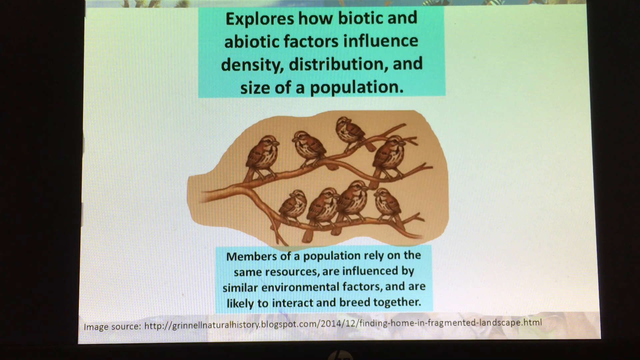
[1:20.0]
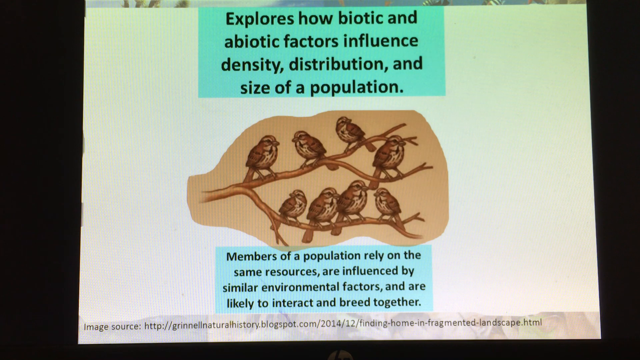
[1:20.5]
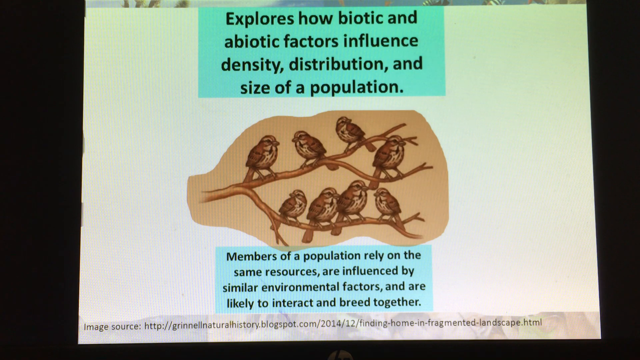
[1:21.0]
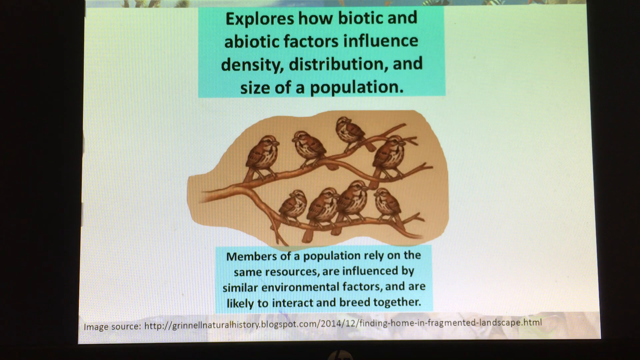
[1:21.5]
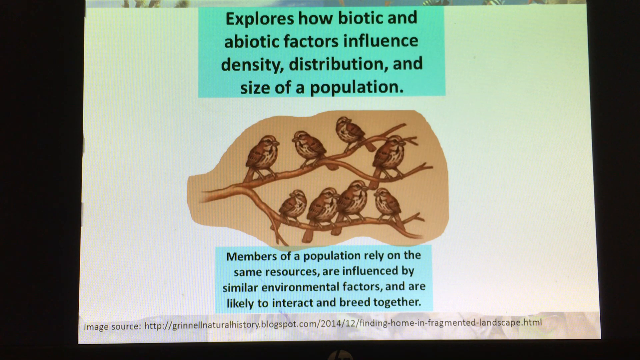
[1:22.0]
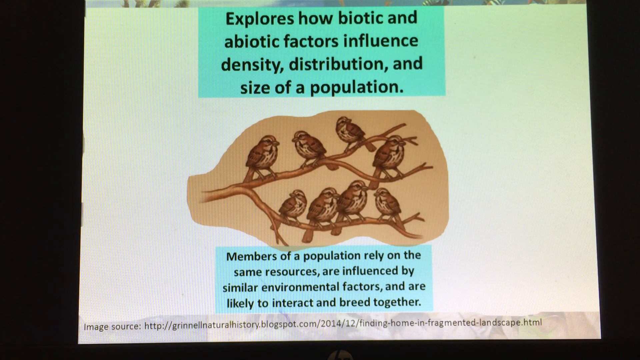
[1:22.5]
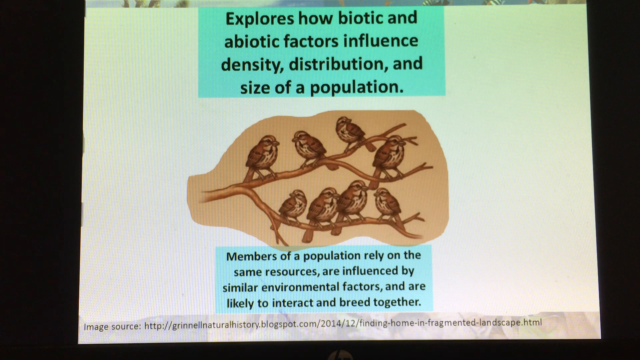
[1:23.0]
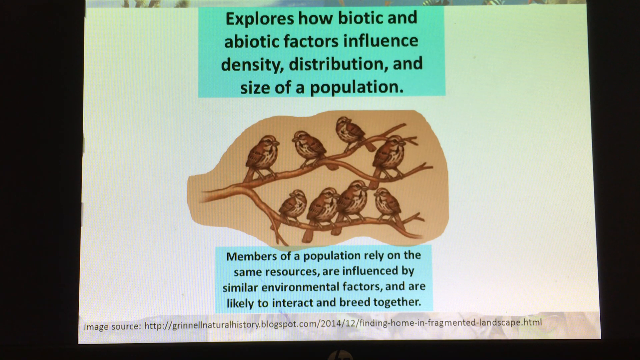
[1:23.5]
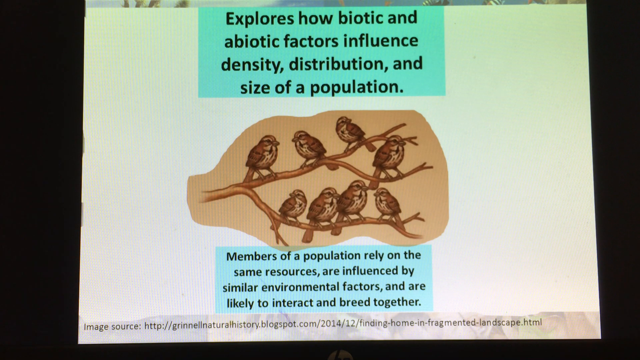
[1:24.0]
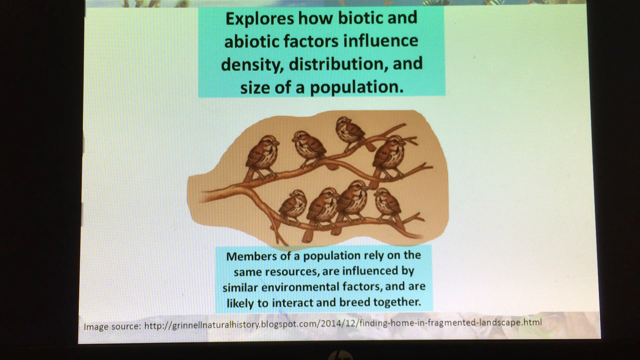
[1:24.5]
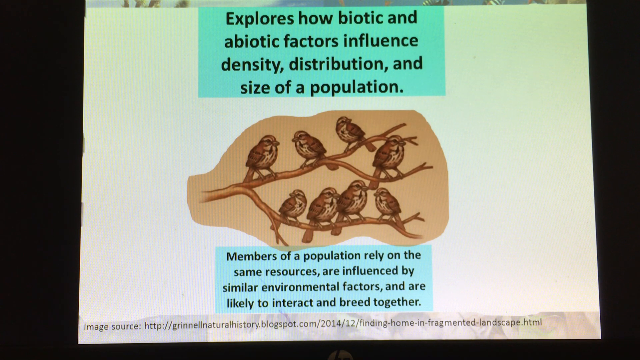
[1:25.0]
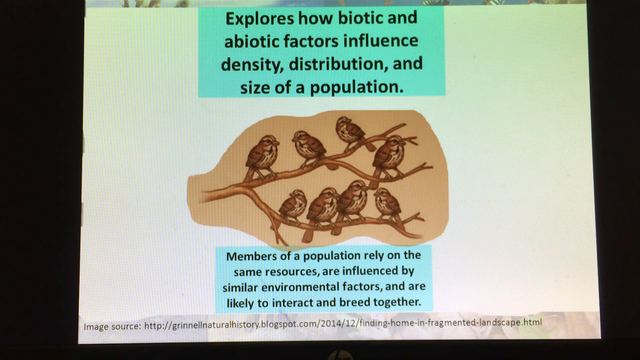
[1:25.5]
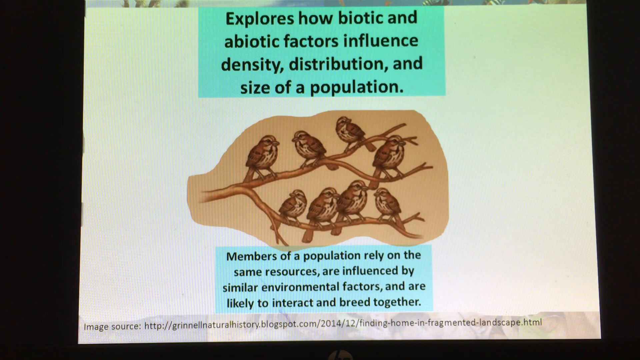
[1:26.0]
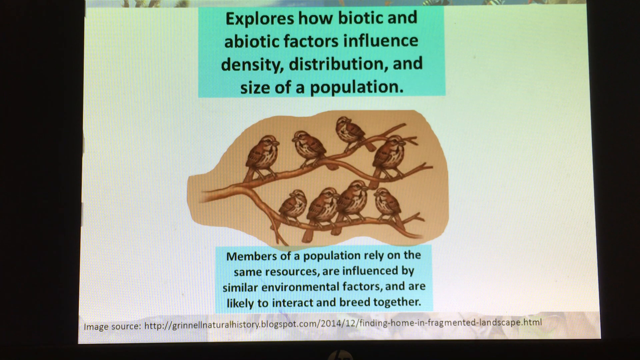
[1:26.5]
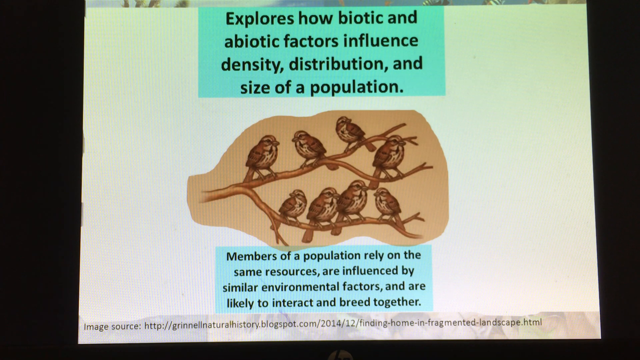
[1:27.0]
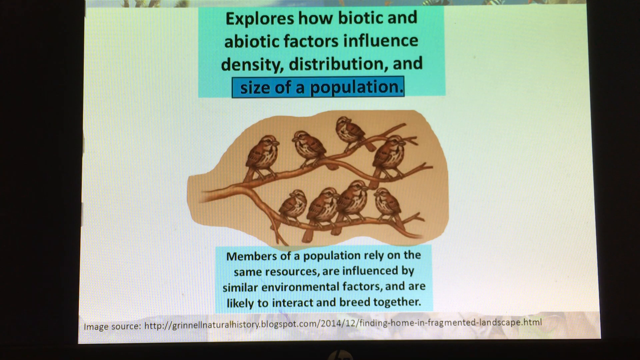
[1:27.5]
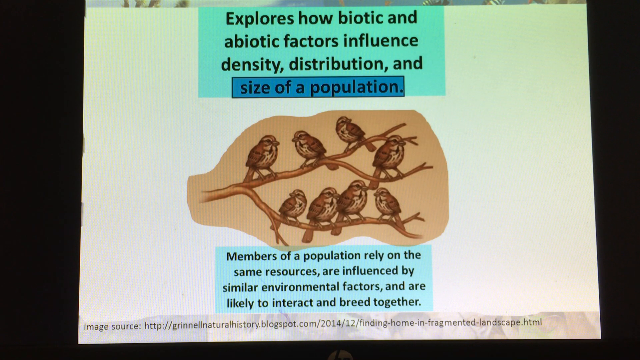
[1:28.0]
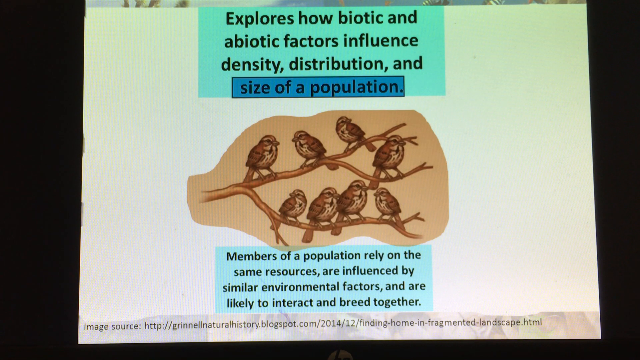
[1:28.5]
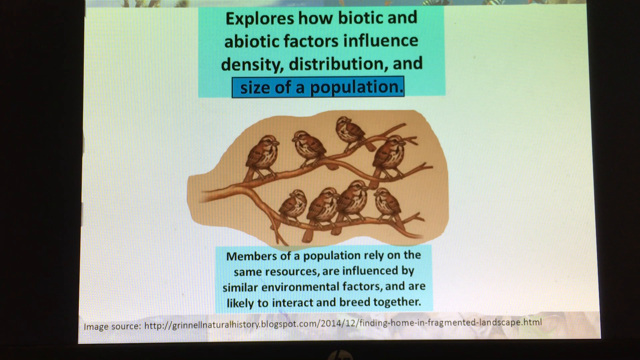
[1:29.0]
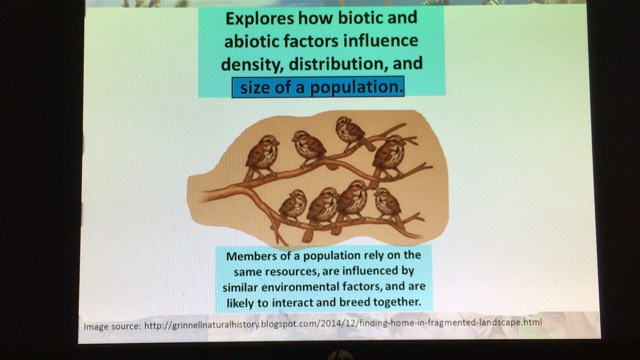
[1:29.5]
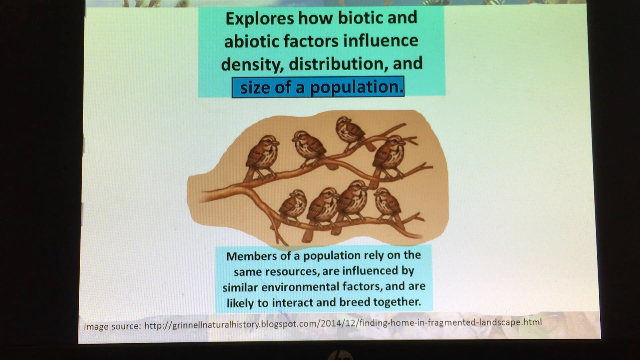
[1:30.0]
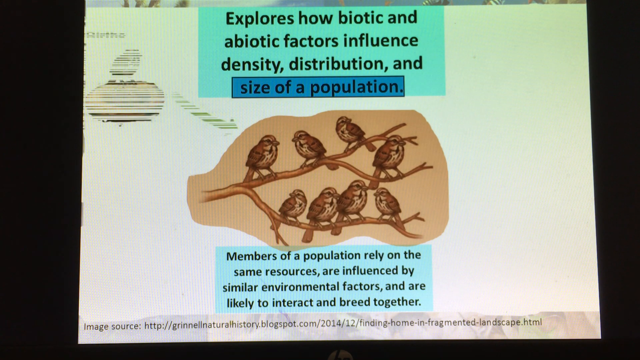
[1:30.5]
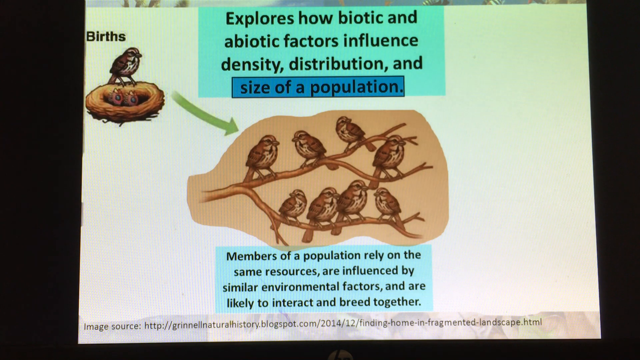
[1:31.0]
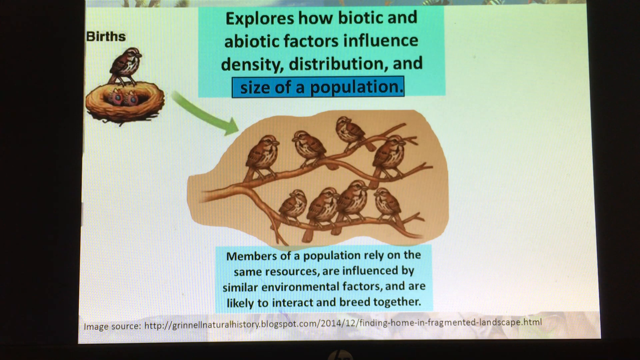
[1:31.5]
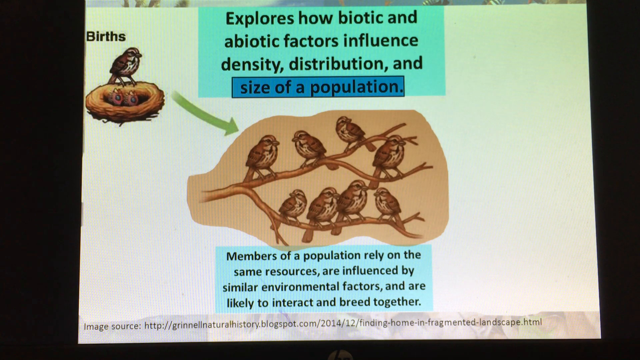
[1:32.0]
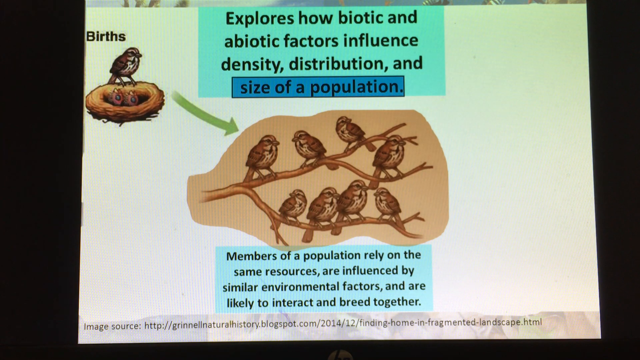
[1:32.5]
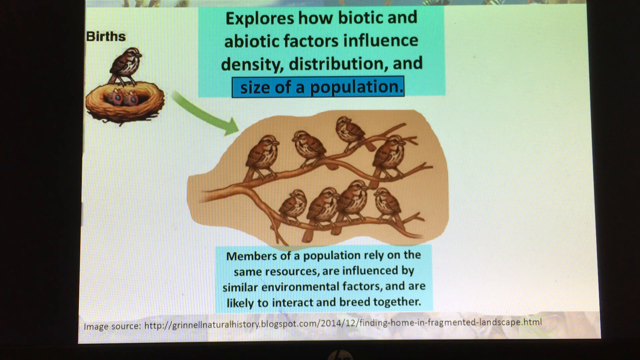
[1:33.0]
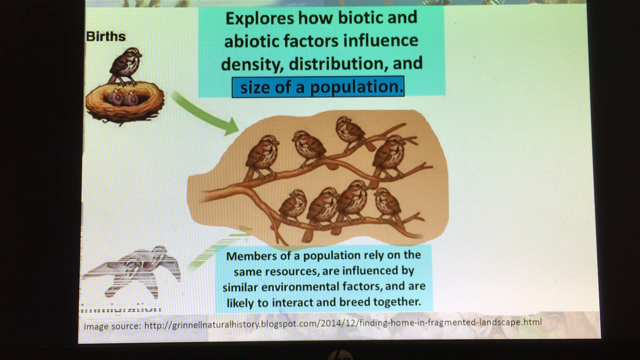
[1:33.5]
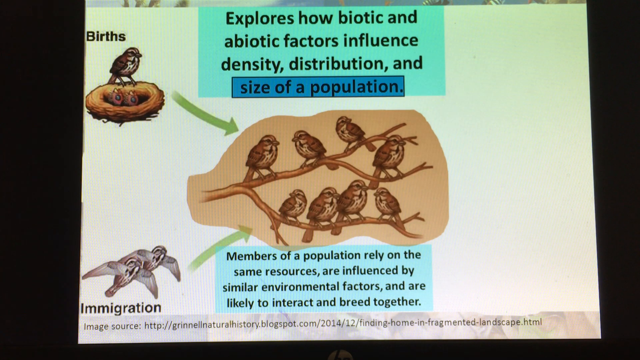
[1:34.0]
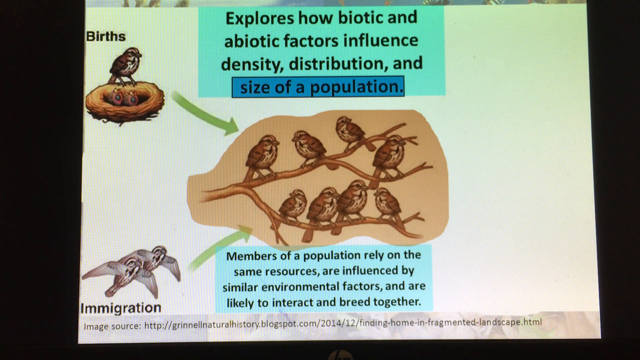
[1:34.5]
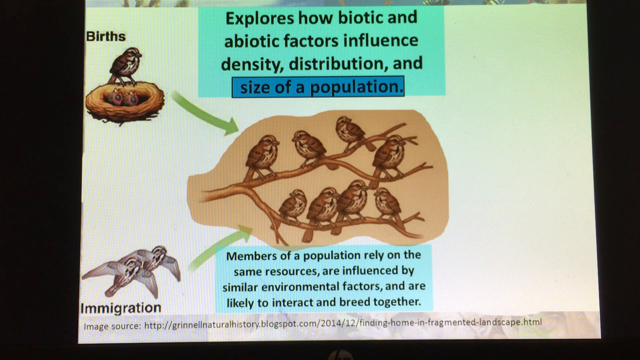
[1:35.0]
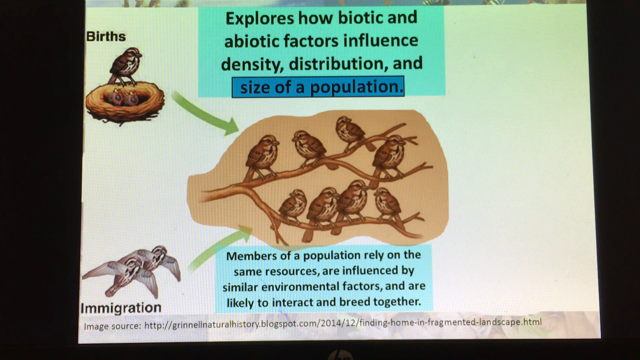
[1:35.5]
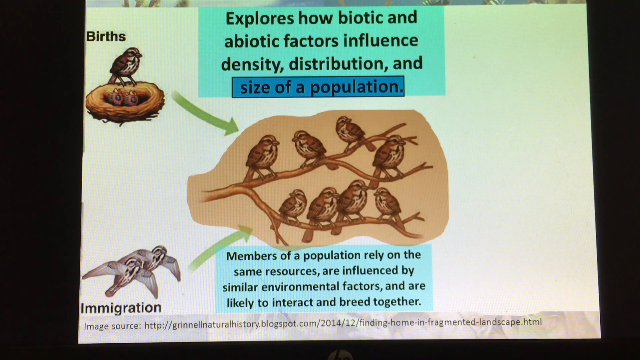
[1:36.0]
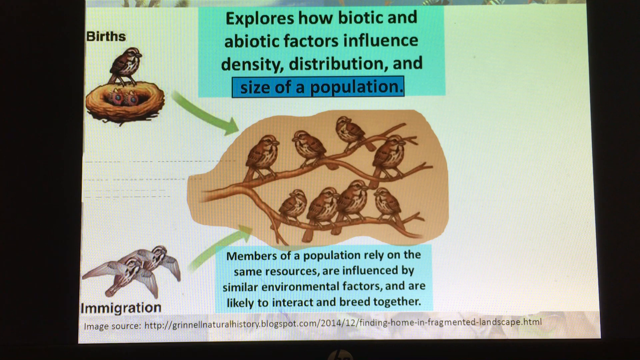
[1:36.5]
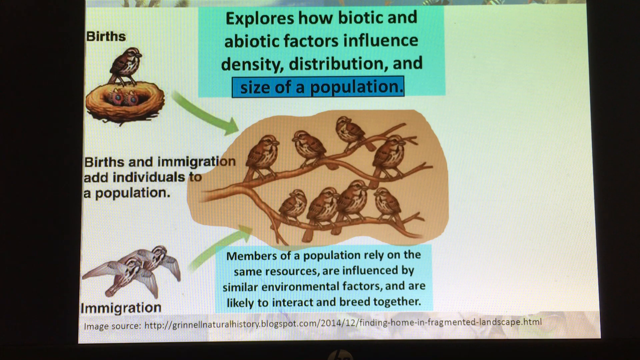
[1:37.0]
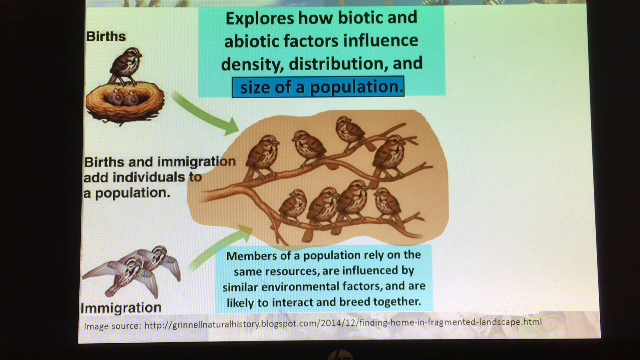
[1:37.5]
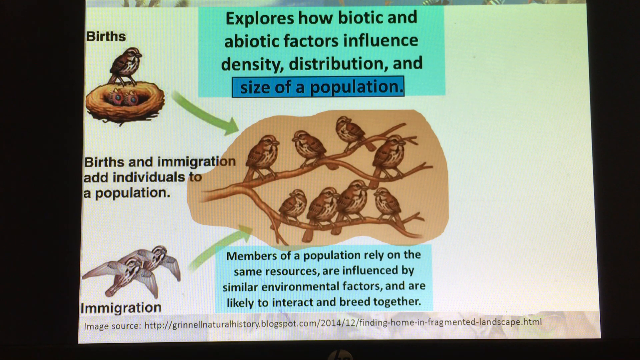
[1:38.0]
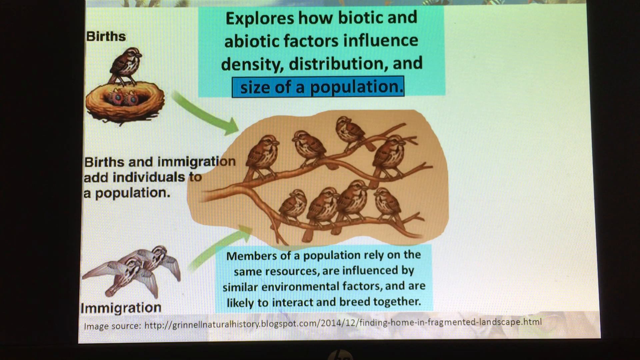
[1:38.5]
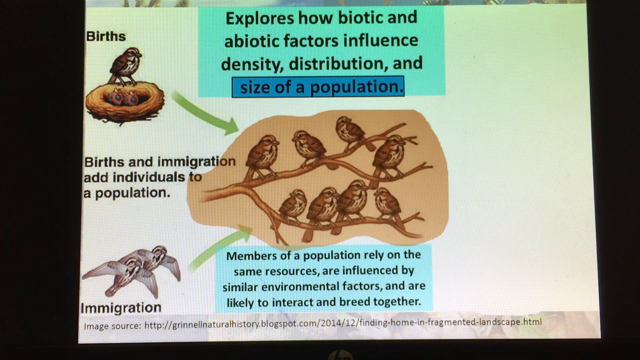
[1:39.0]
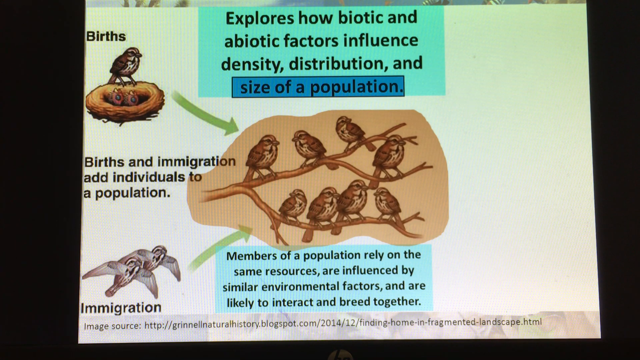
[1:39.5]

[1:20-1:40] The same slide remains, with a blue, almost neon blue box at the top reading "explore how biotic and abiotic factors influence density distribution and size of population." Below it is the picture of eight birds on three branches: three on the top, one on the lower, and four on the bottom branch. The birds are all brown and white, and the collection of birds is surrounded by a fill-in of a kind of light brownish color. Below the picture is the statement "members of a population rely on the same resources, are influenced by similar environmental factors, and are likely to interact and breed together." A highlight appears in the top box on the words "size of a population." Then a nest with a bird on top of it appears in the upper left corner along with the word "births," and a green arrow points to the picture of the eight birds. Next comes a picture of what looks like a couple of swallows with the word "immigration" underneath, and another green arrow points to the picture of the eight birds. A short sentence then appears to the left of the bird picture: "births and immigration add individuals to a population."